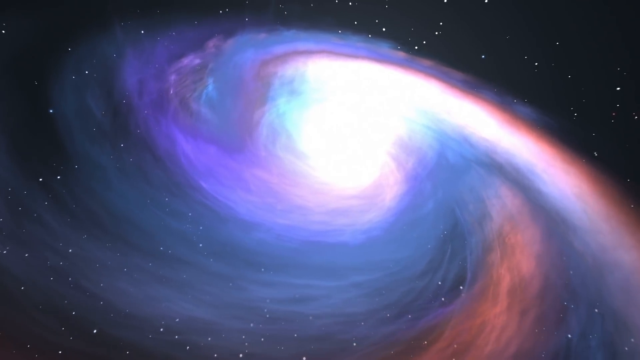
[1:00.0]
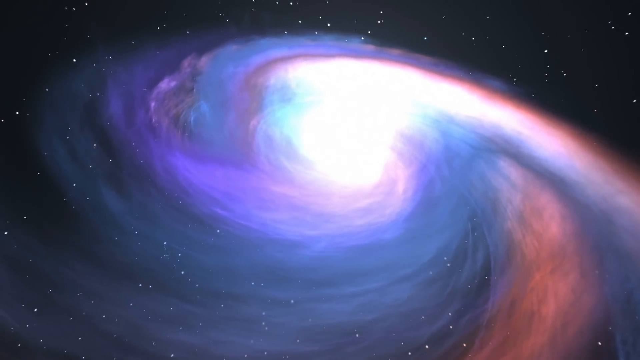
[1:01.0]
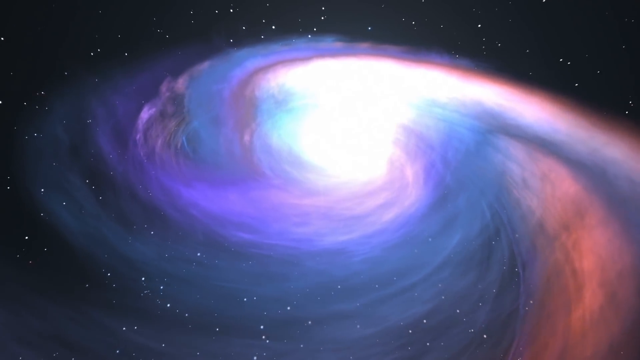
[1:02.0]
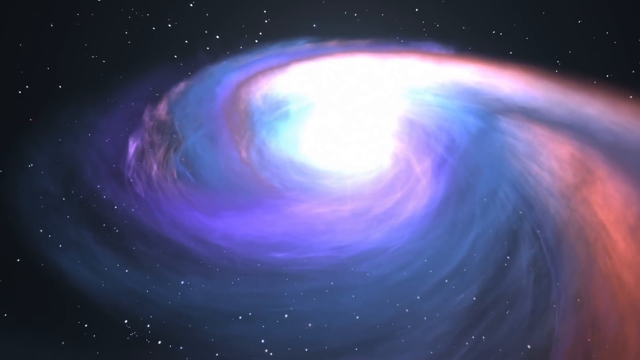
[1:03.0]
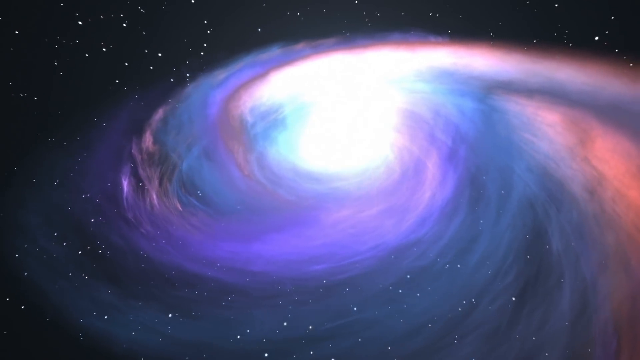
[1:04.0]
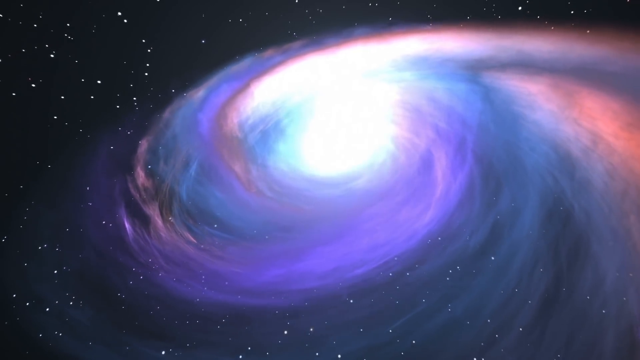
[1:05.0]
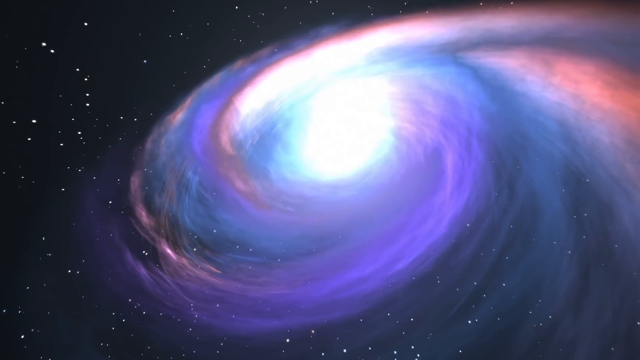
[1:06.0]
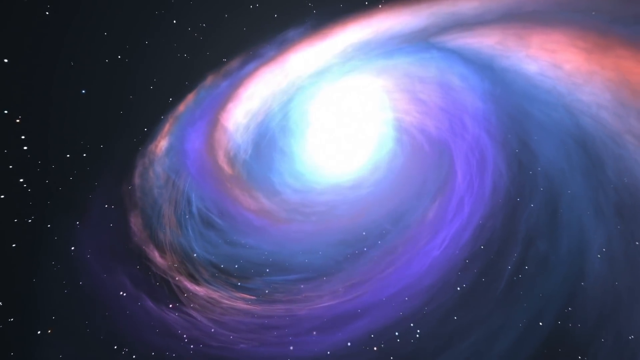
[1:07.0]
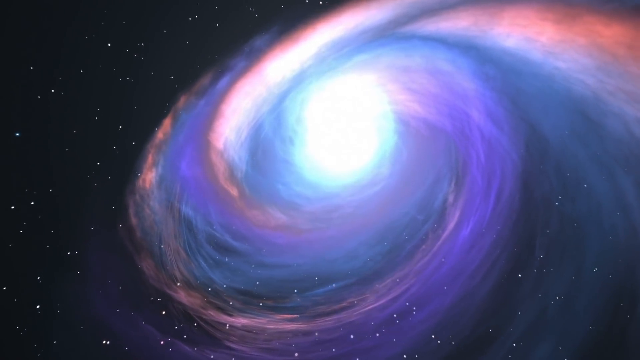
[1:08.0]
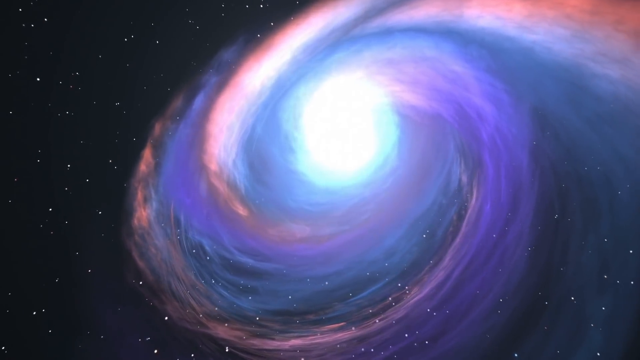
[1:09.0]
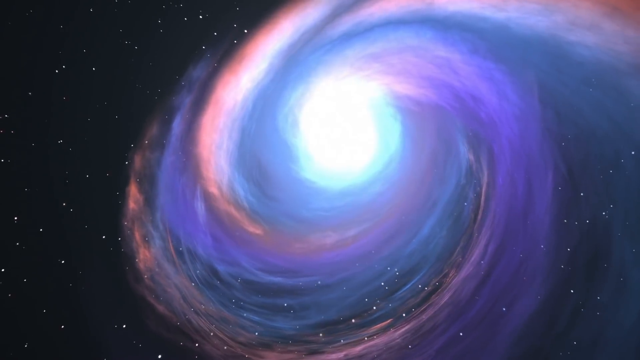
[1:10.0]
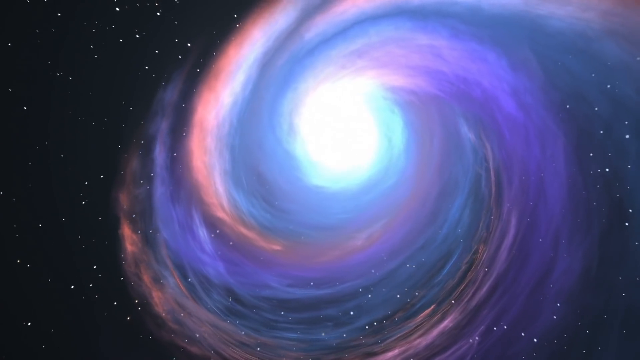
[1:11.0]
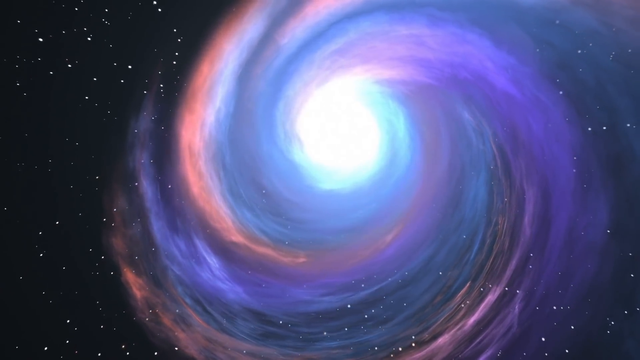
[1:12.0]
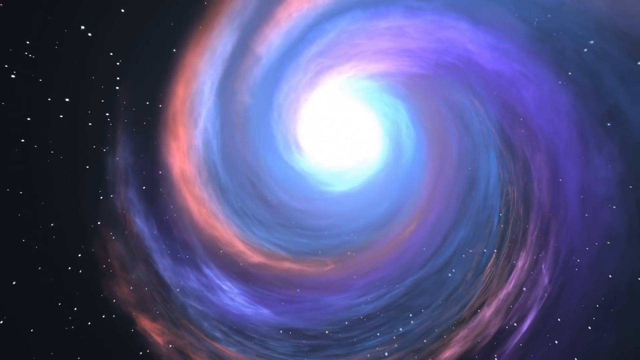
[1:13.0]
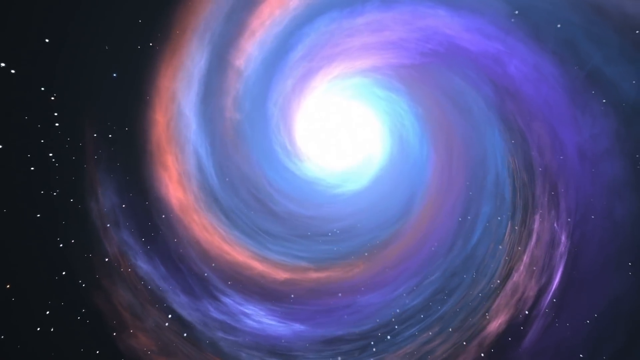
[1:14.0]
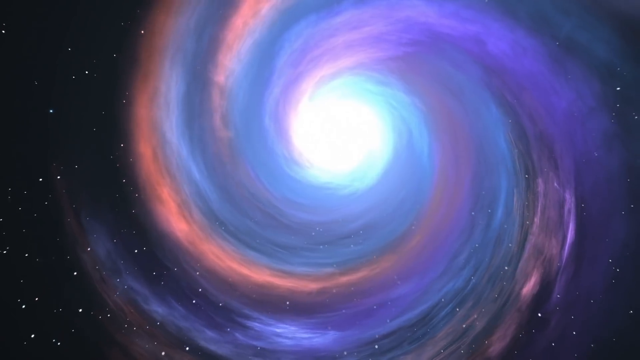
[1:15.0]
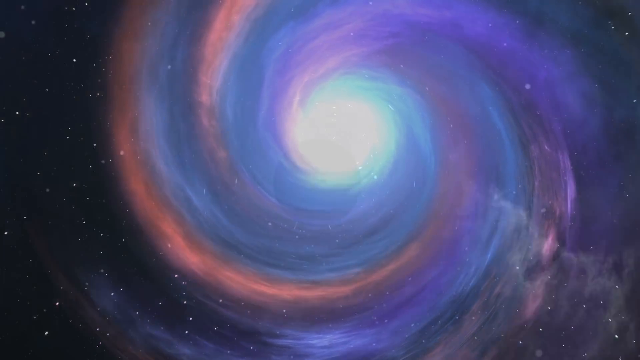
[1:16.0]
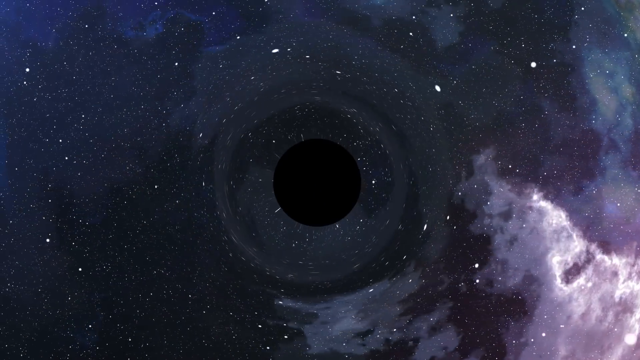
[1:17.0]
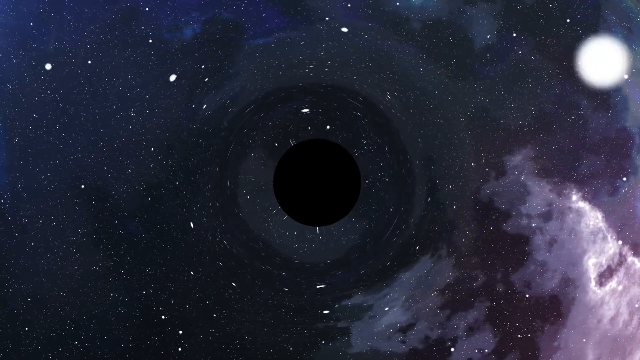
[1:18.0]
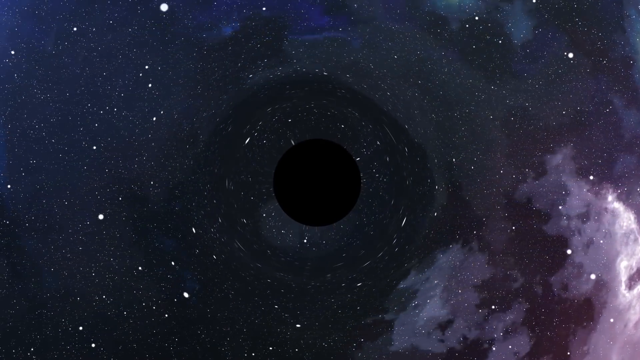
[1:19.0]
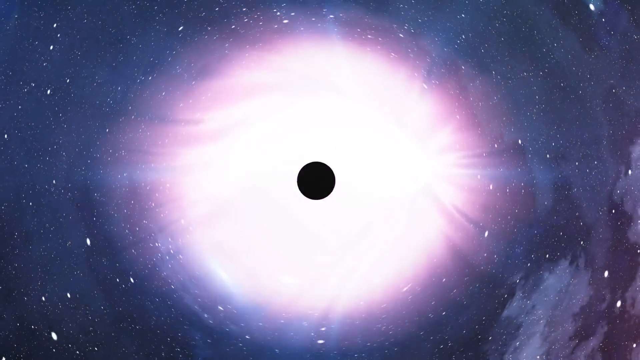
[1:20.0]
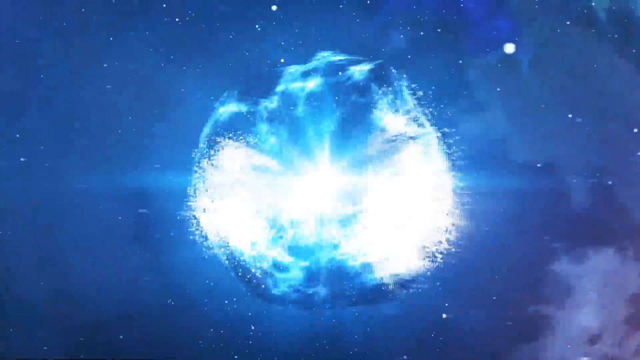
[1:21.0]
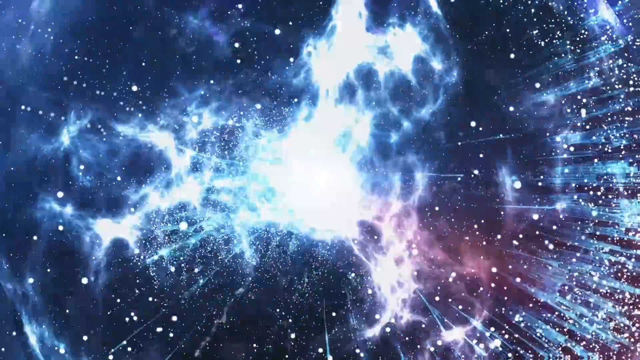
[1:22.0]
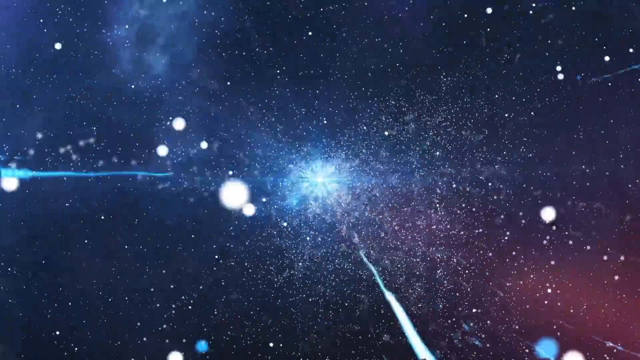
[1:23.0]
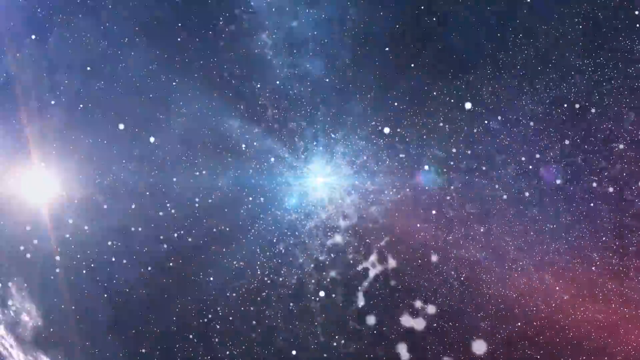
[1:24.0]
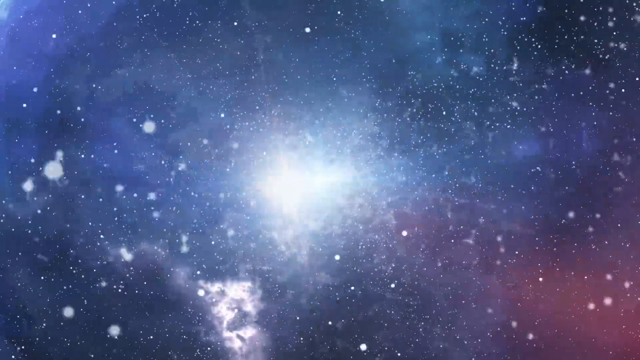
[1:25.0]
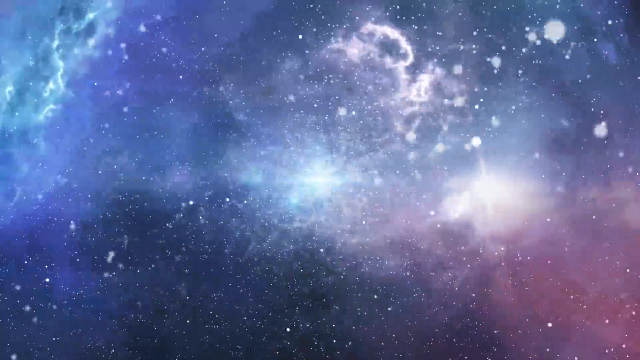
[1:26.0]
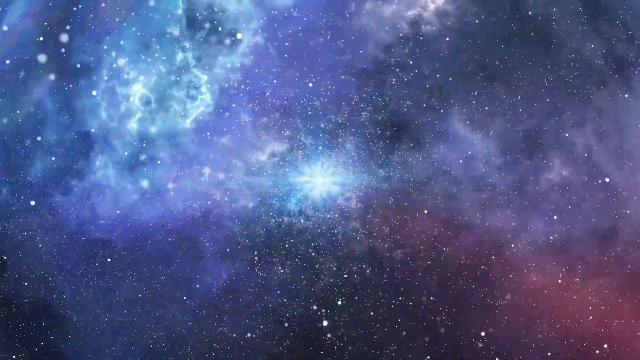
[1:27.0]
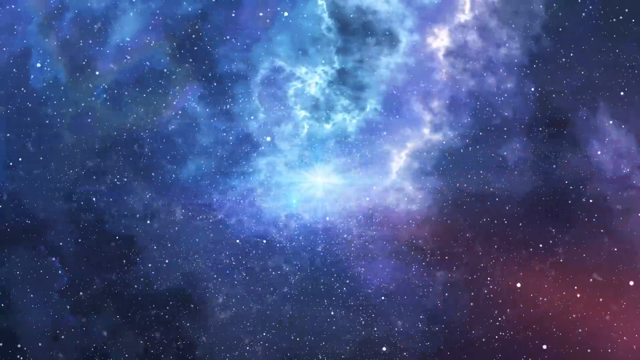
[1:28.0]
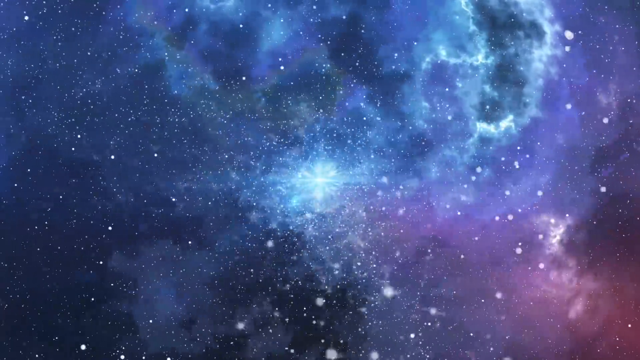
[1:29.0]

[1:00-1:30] The scene still looks like a galaxy hurricane, with colors swirling around and a super bright circular eye. The colors are blue and an orange-reddish color. The camera seems to go all around it, then goes right above the center part. Then it looks different, like a hole in the galaxy, and that appears to explode into many big circles or dots everywhere: some purple, some blue, some magenta and some light blue. It looks like everything exploded.